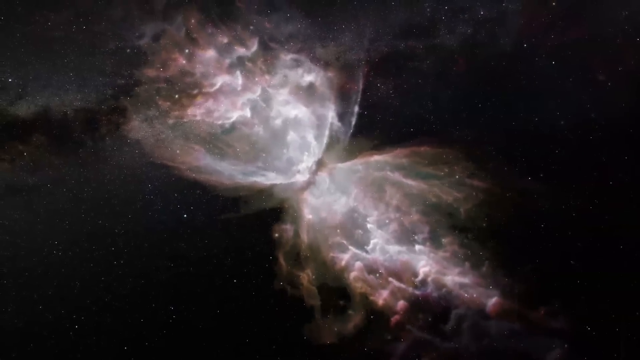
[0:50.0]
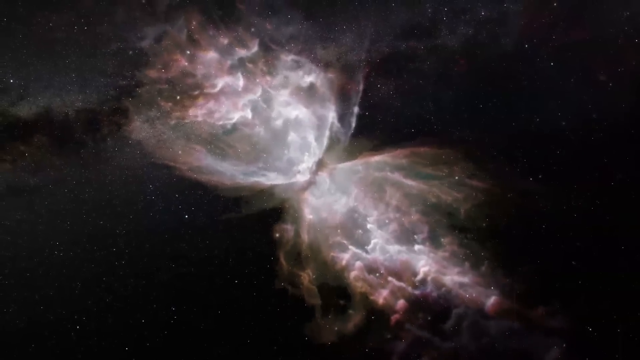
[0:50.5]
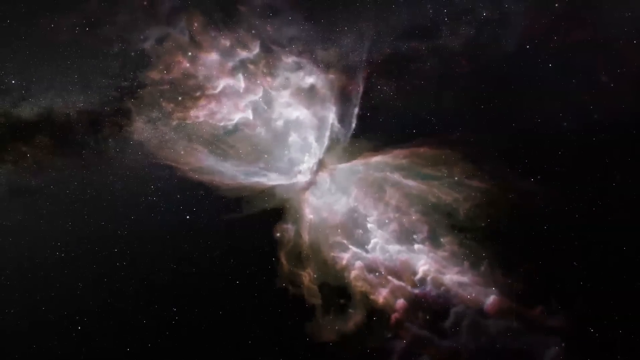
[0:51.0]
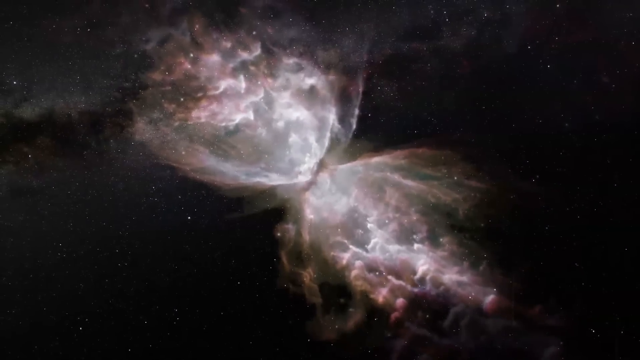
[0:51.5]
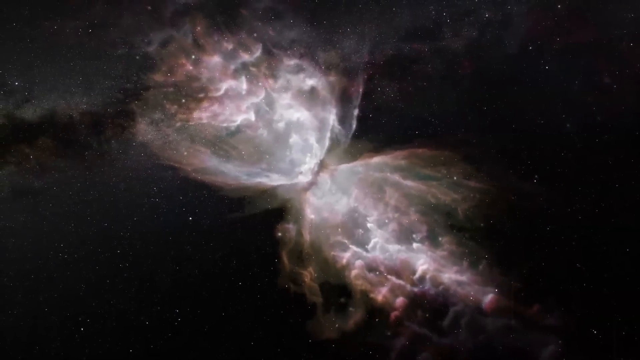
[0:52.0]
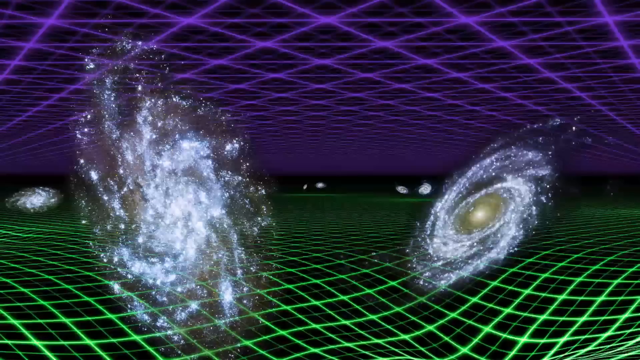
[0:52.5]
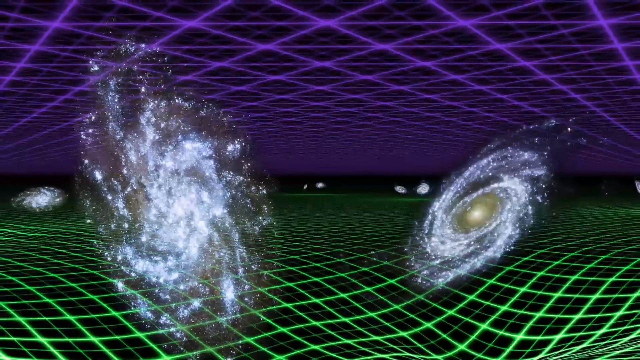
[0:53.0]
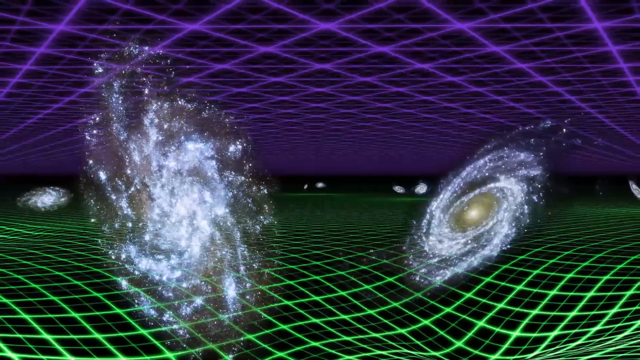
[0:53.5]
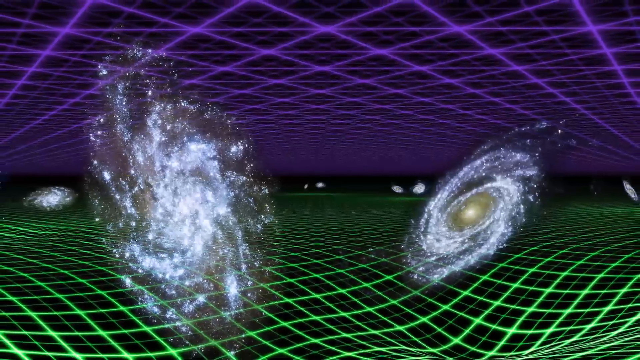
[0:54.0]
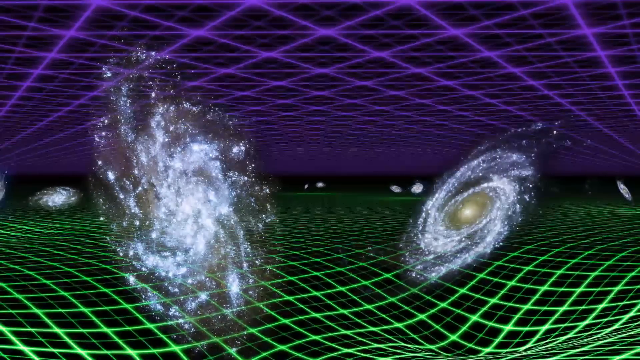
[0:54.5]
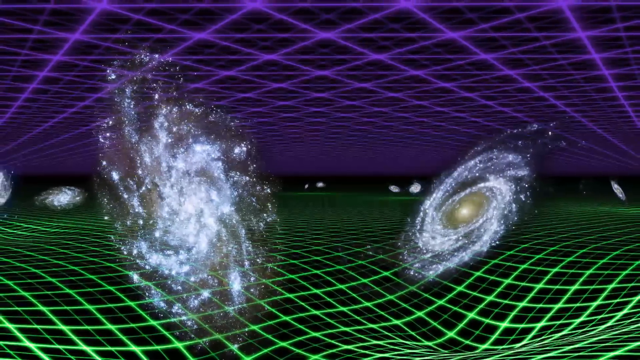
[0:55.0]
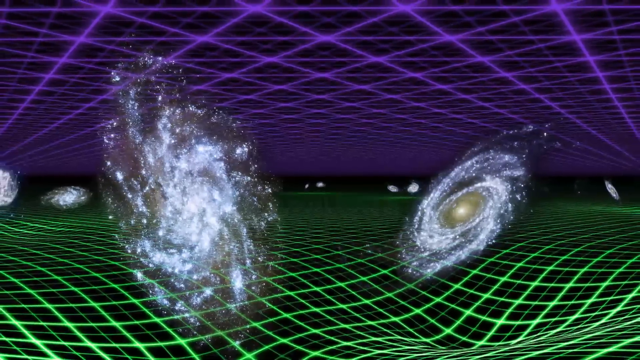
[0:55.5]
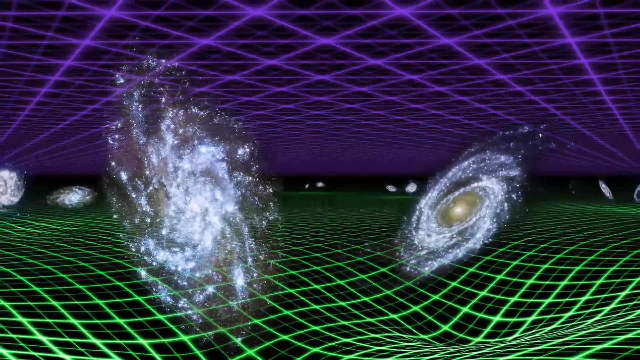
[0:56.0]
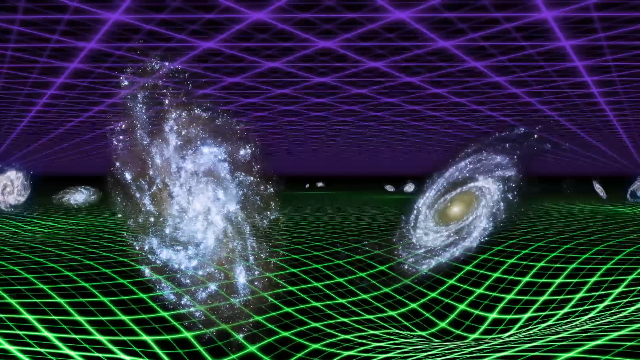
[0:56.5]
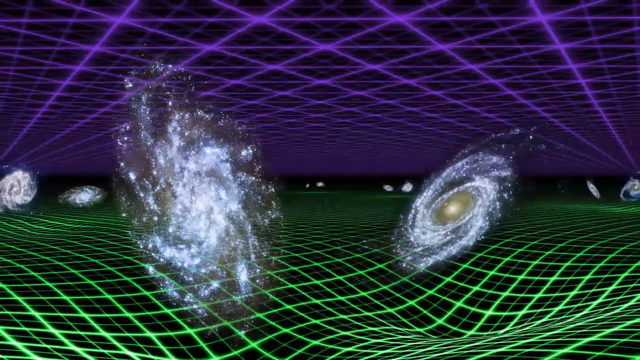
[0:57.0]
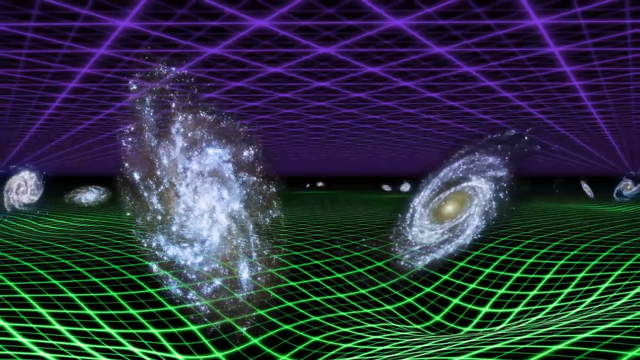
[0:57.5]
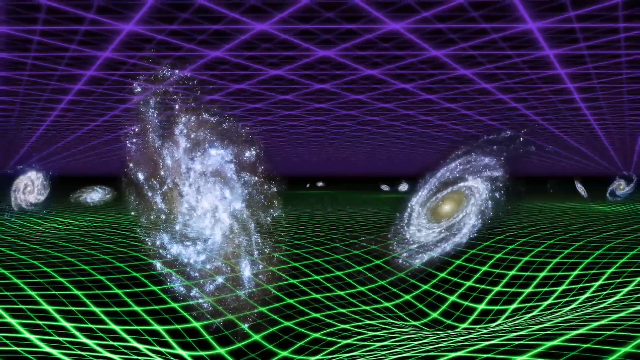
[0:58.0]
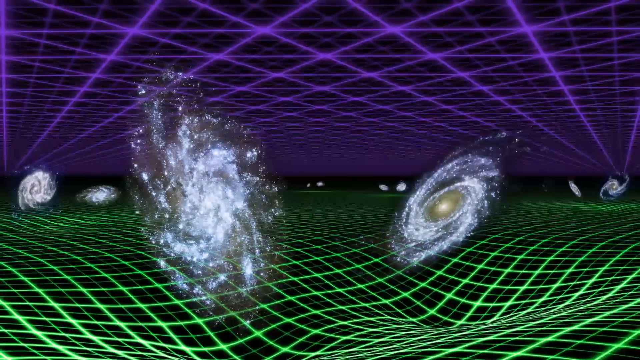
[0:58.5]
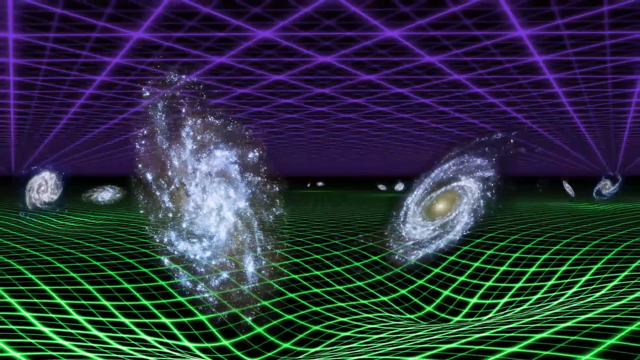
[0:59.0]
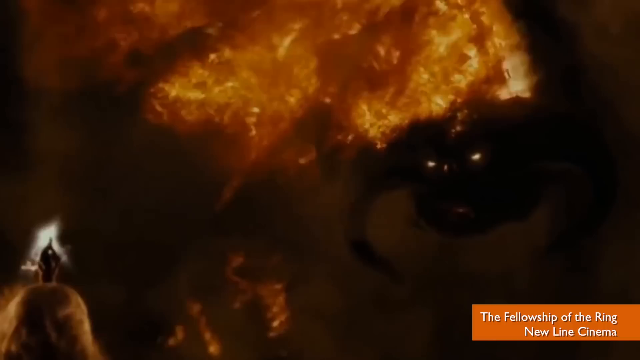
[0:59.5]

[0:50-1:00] More graphics follow, including one that appears to depict individual galaxies. They seem to have a swirl-type shape, almost like a vortex, with a point of light in the middle, and they are all separate from each other. They are shown within a large computer-animated grid-type structure. The top of the grid has an almost checkered pattern of glowing purple intersecting lines that look almost like laser beams criss-crossing one another, forming a kind of ceiling. The same thing appears at the bottom, forming a kind of floor, but made of green intersecting lines.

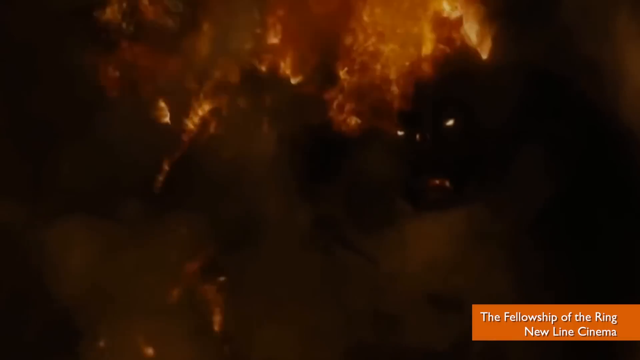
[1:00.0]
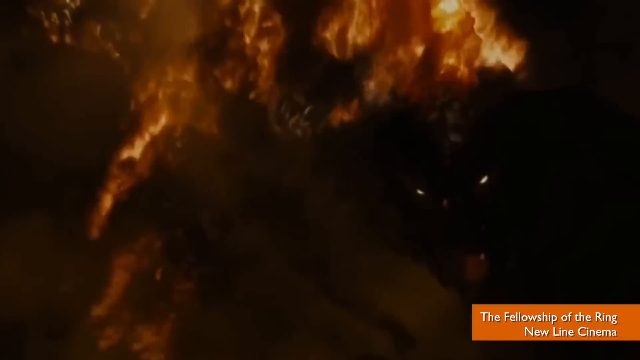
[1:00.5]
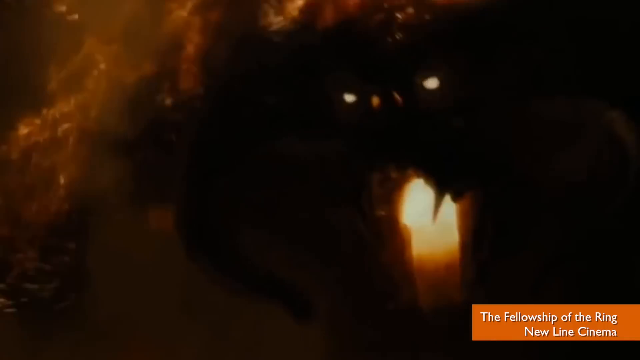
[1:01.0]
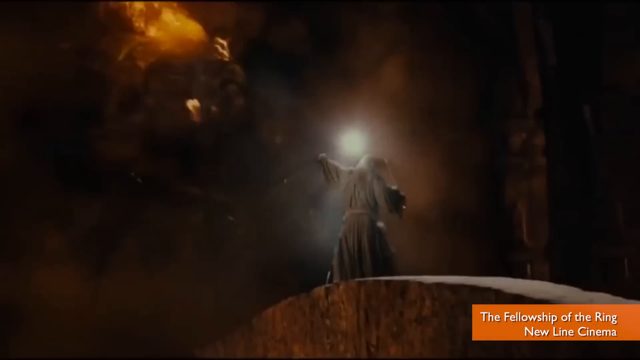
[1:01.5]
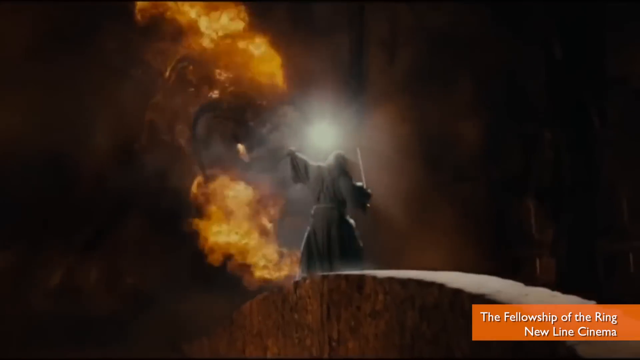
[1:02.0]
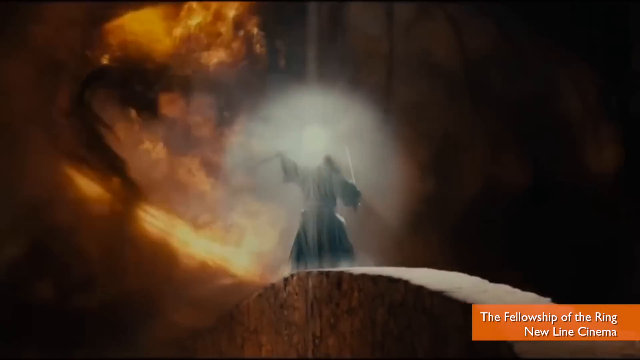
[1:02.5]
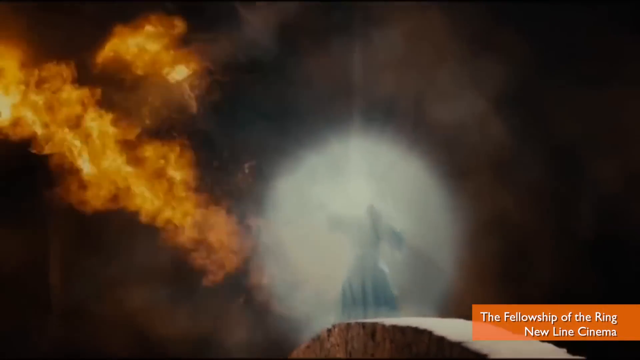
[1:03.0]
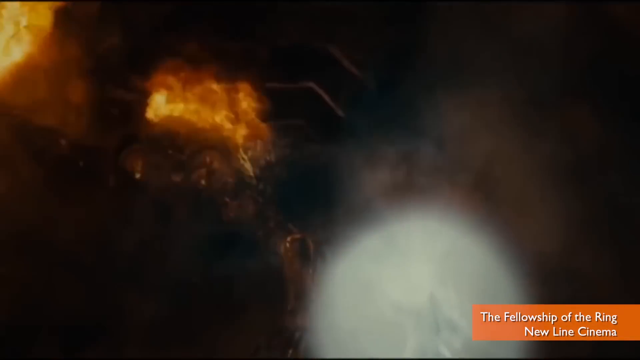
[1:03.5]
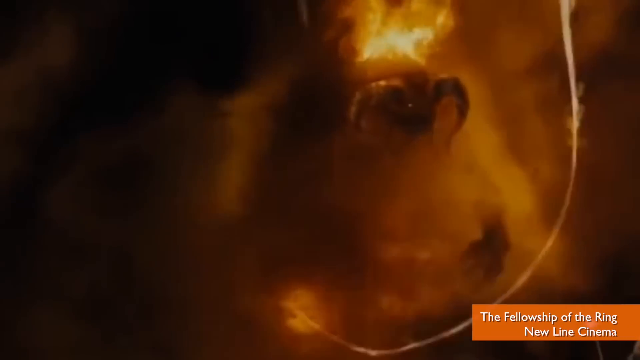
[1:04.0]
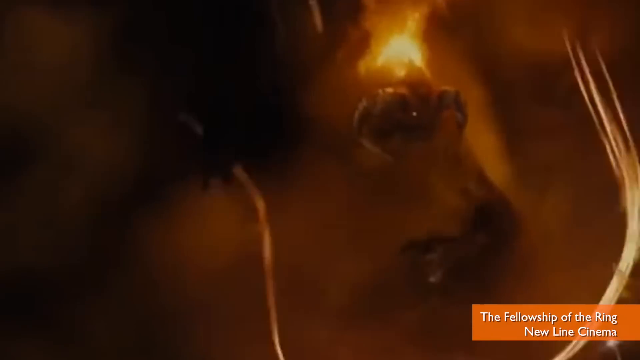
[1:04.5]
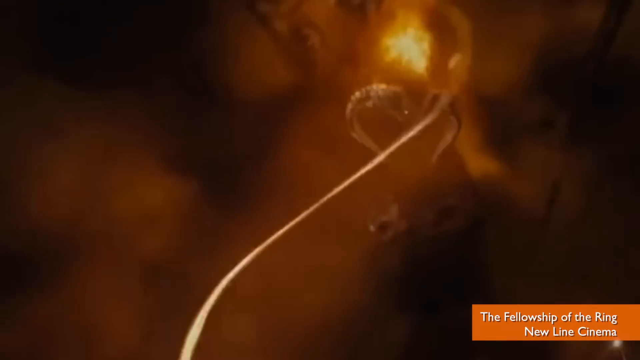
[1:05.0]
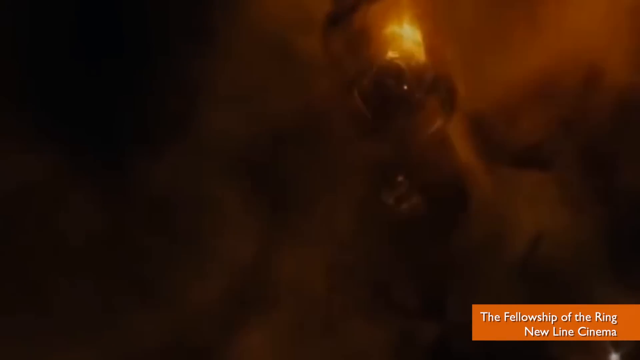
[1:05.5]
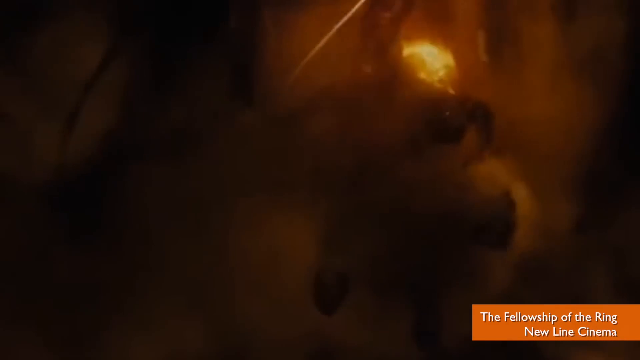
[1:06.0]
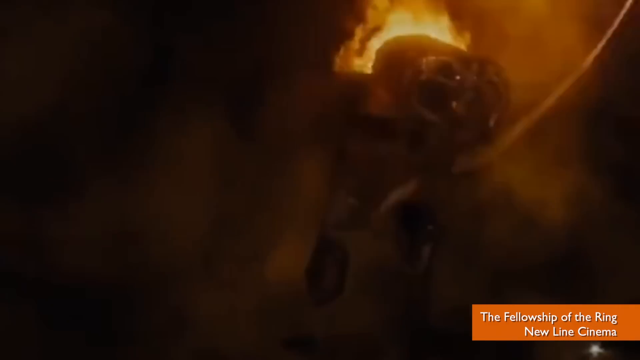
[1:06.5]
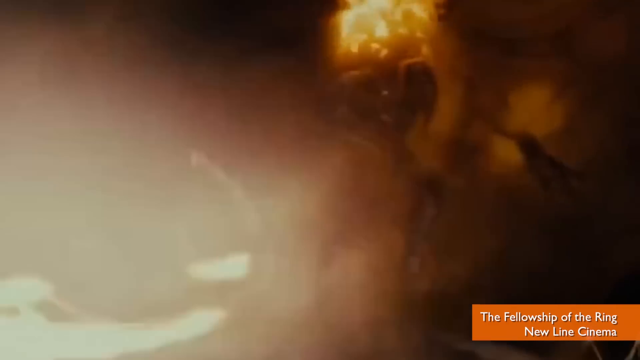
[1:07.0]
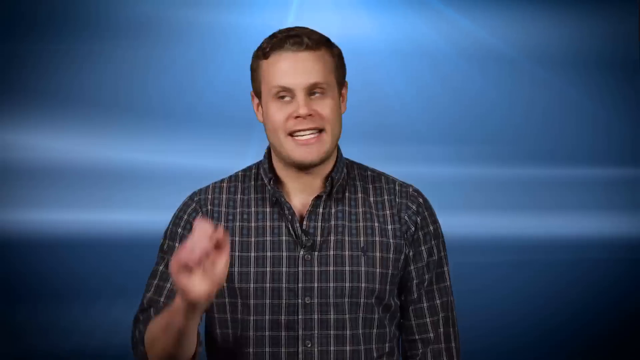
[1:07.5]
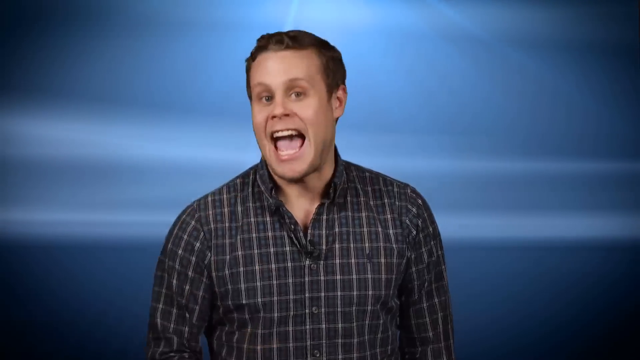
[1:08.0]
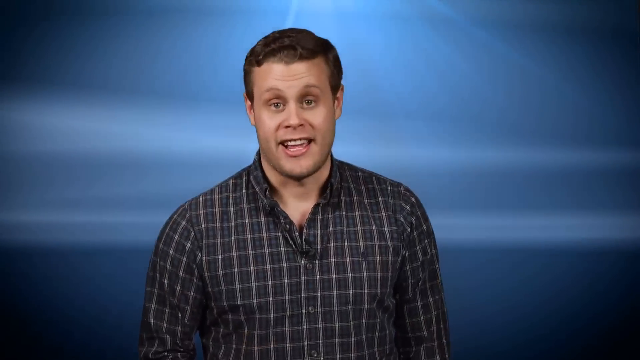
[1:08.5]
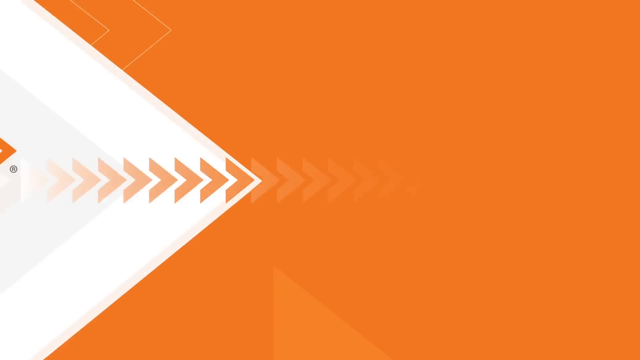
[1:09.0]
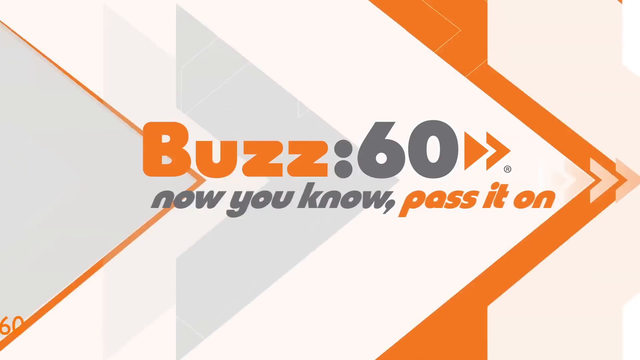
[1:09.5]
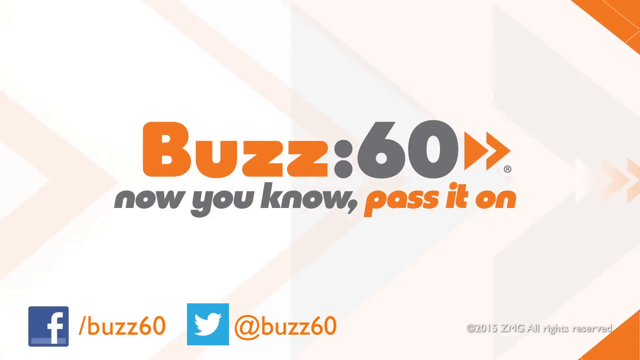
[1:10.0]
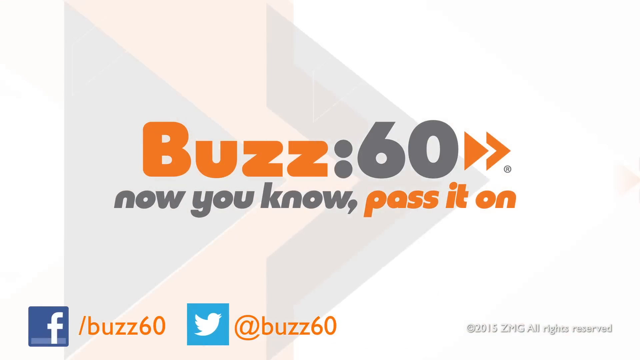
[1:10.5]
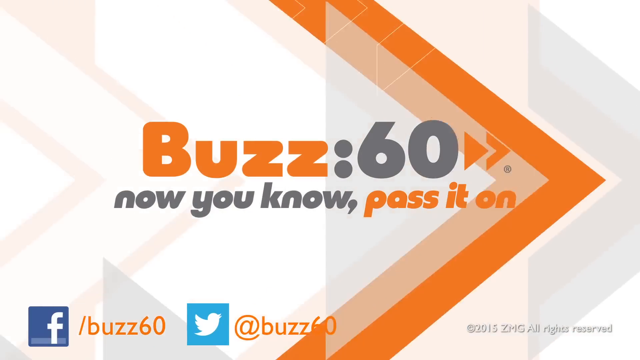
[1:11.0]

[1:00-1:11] A scene appears that looks almost like a fantasy-style scene; a credit in the bottom corner shows it is from the Lord of the Rings movie The Fellowship of the Ring, from New Line Cinema. In a very dark space, a large flaming beast with horns fights a wizard, whipping a whip at him. Finally, the Buzz 60 logo appears at the end, closing out the video.